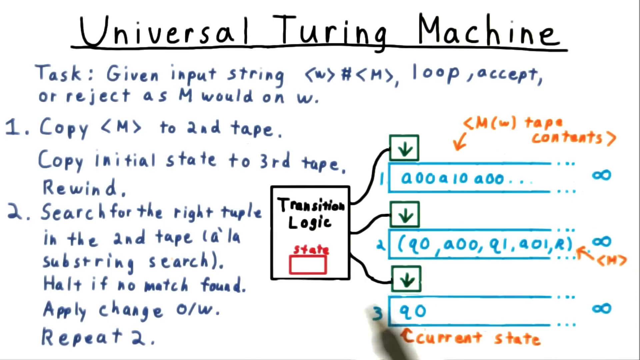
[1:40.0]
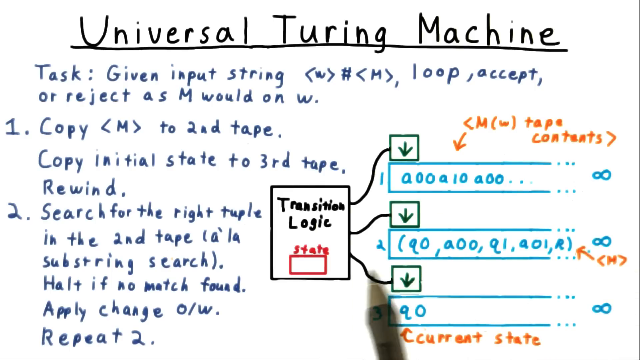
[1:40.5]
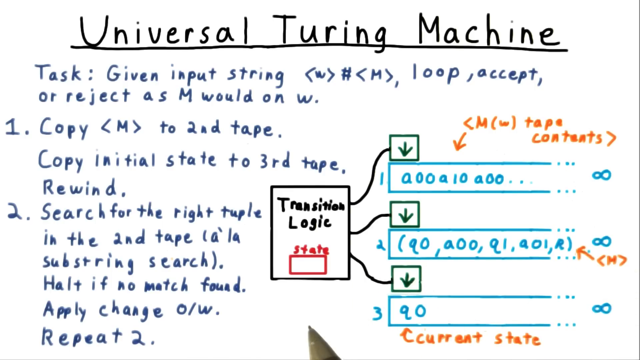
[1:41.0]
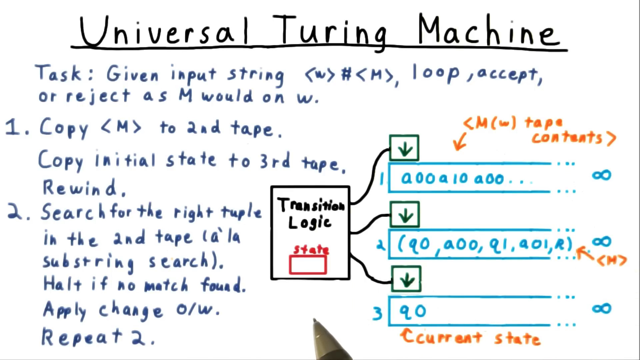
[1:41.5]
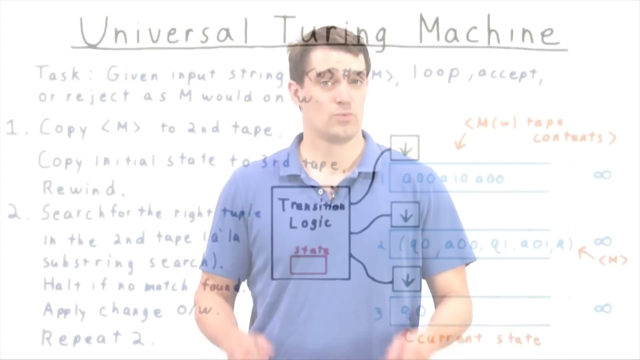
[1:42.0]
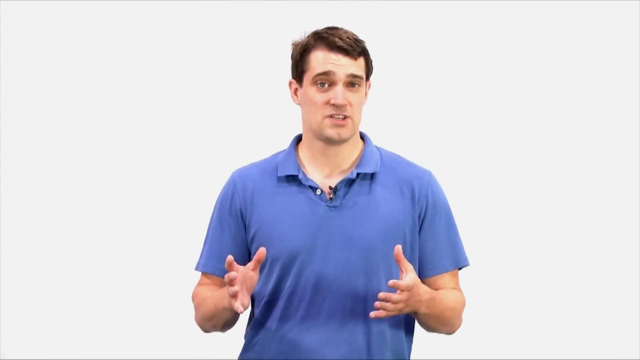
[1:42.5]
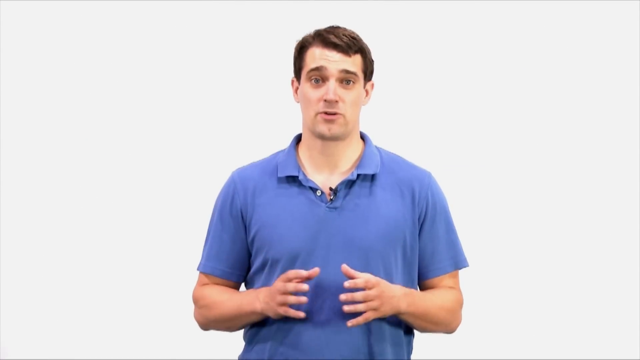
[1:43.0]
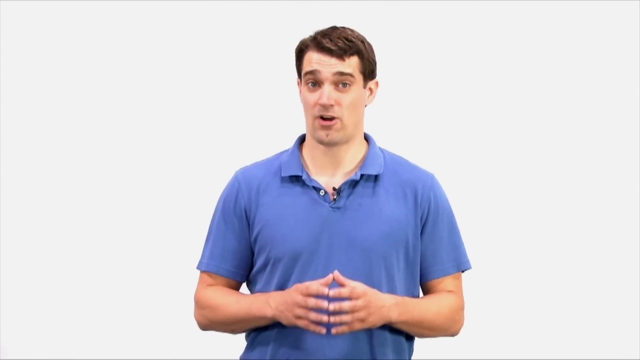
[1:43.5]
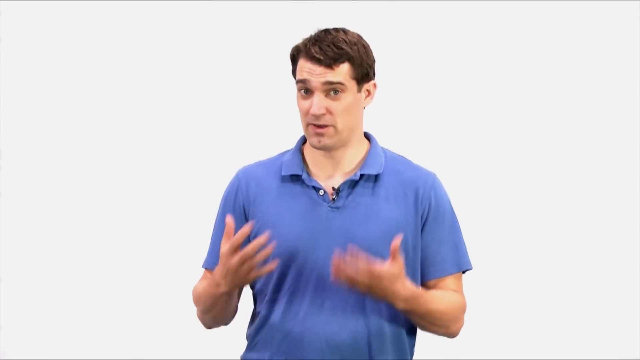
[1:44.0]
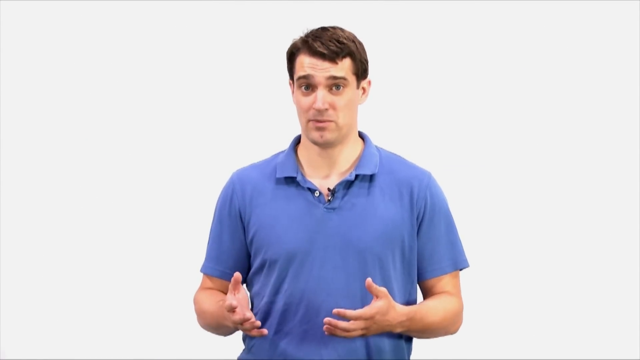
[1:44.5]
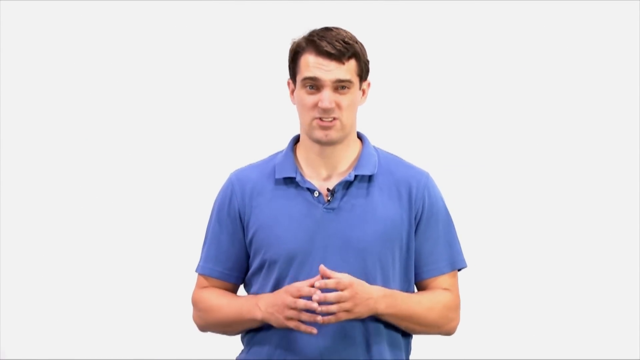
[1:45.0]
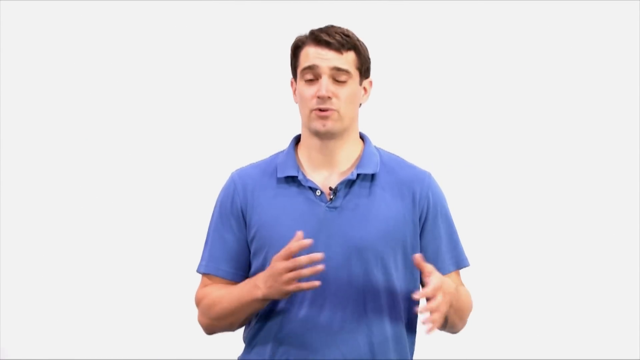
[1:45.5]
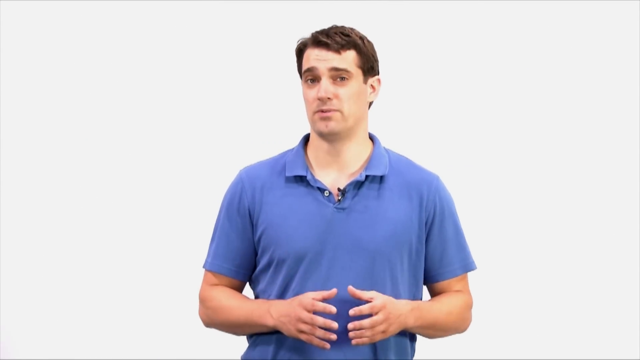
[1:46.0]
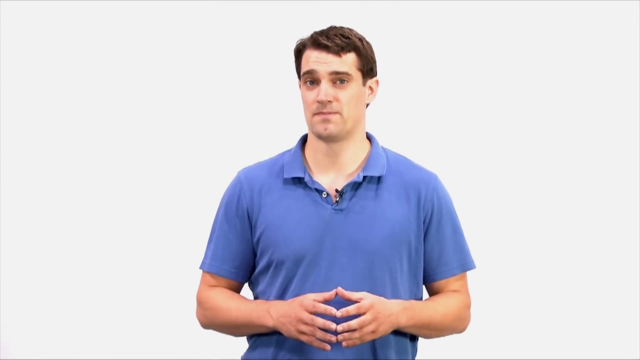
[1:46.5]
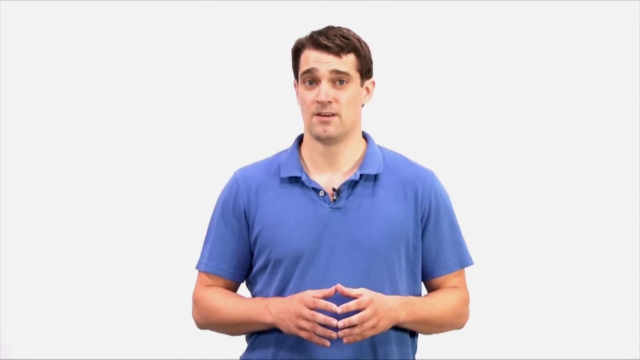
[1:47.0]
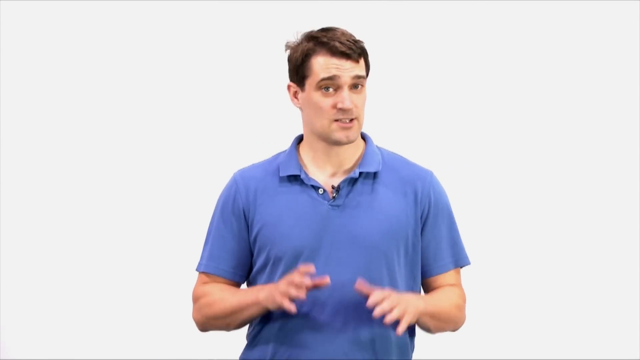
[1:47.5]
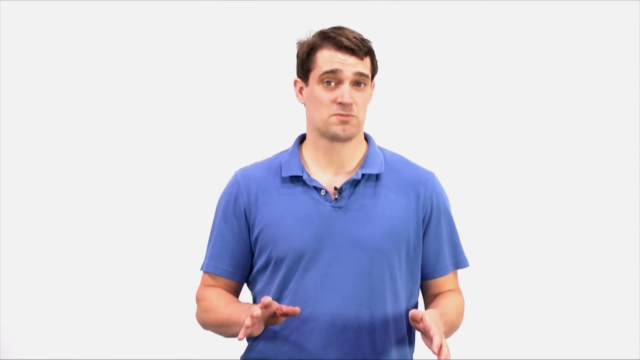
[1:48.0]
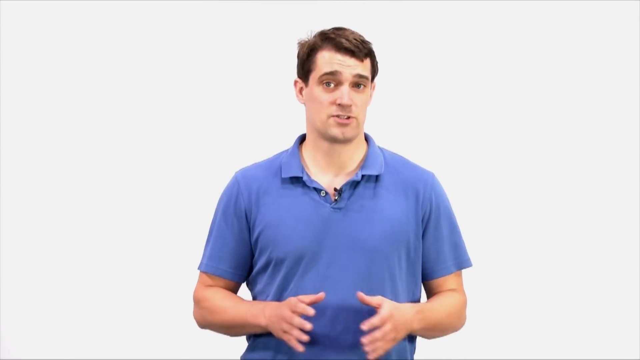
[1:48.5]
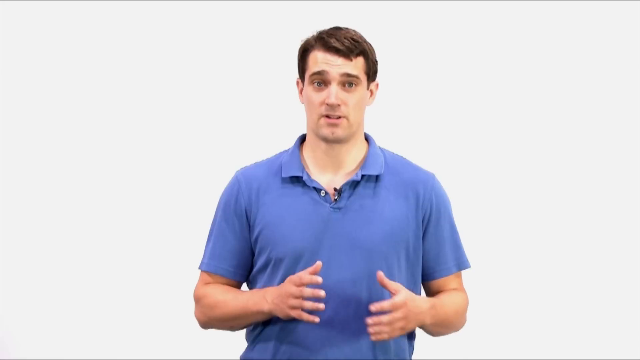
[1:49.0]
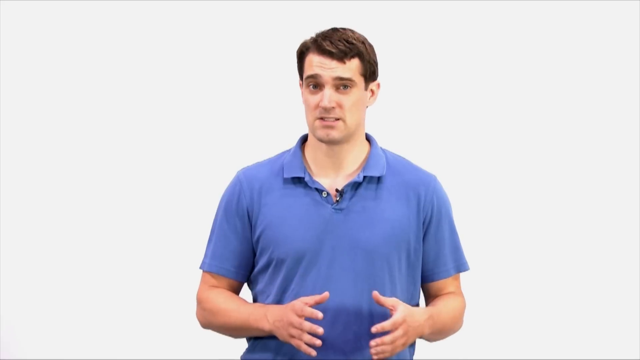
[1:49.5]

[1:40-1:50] The video shows the digital whiteboard with text on the left side and a diagram on the right side. The text is about a universal Turing machine and shows a task that takes an input string and then loops and accepts or rejects. The creator interacts with the whiteboard using a stylus pen. The video then transitions to a man standing with a white background behind him. He talks towards the camera and has a microphone attached to his blue polo shirt. His hands are out in front of him, clasped together by the fingertips; occasionally he breaks them apart and then pulls them back together.